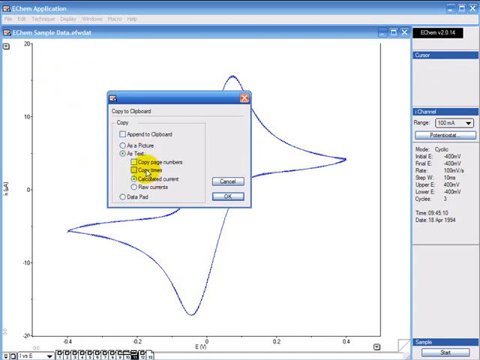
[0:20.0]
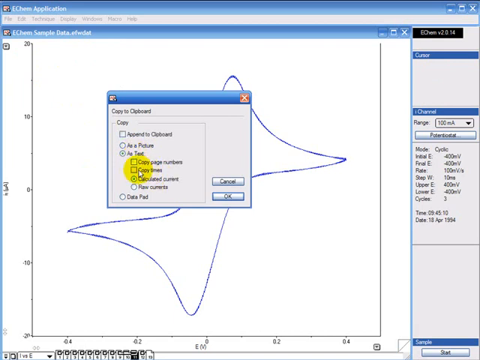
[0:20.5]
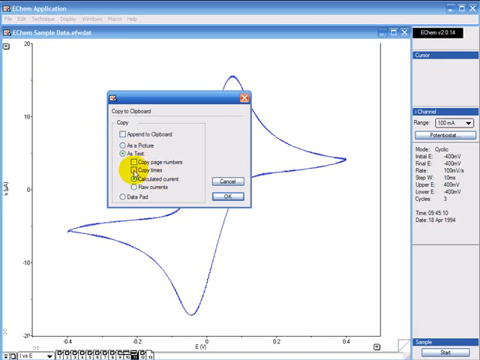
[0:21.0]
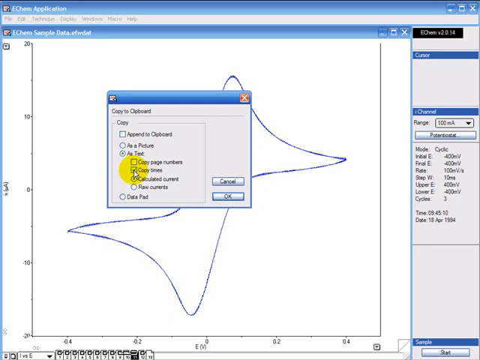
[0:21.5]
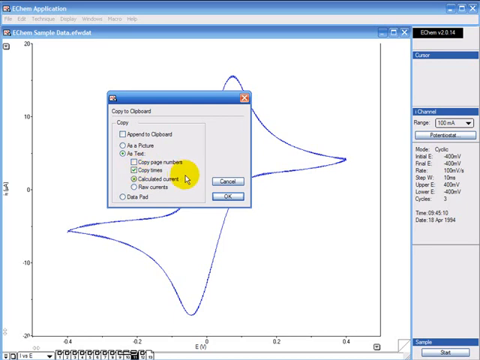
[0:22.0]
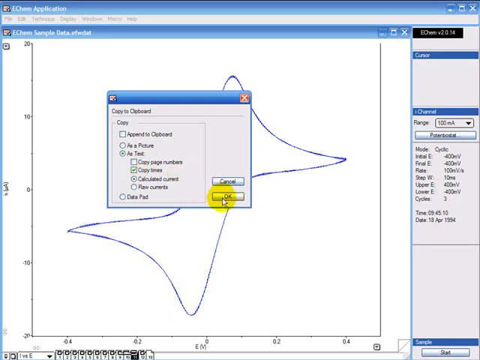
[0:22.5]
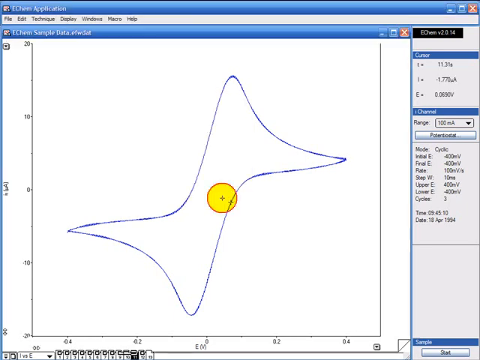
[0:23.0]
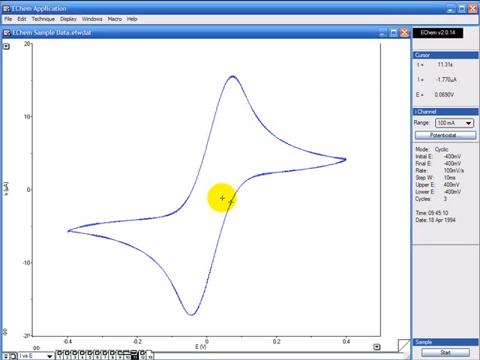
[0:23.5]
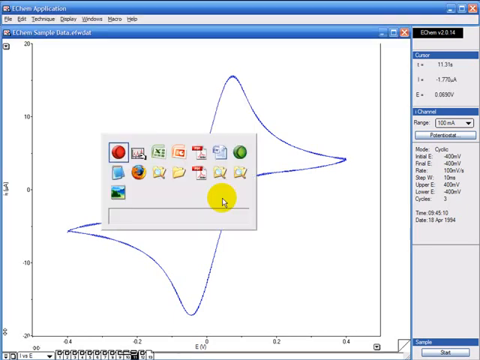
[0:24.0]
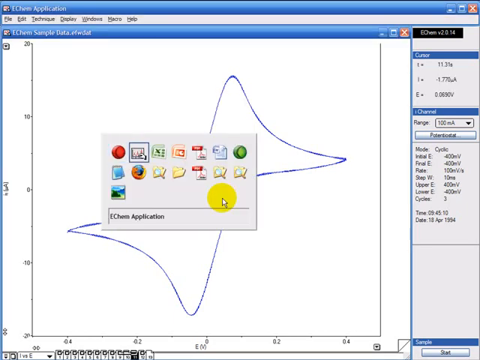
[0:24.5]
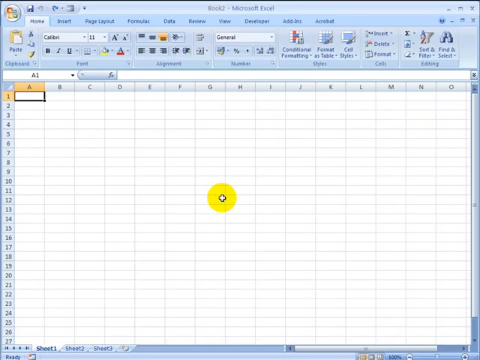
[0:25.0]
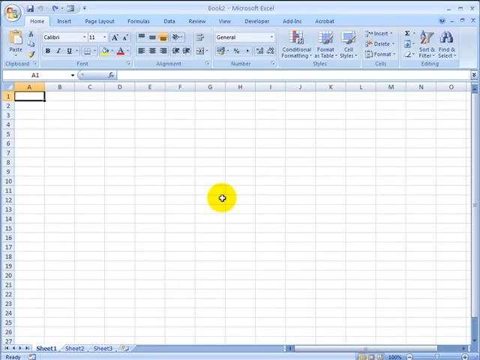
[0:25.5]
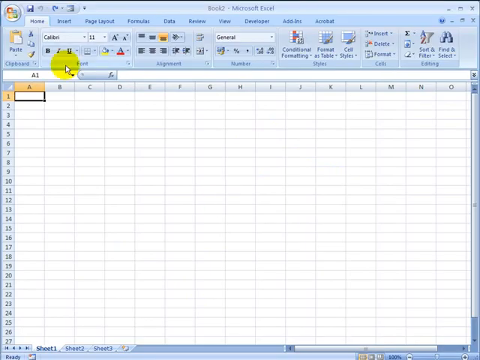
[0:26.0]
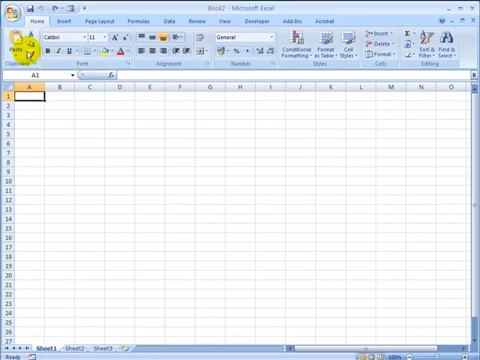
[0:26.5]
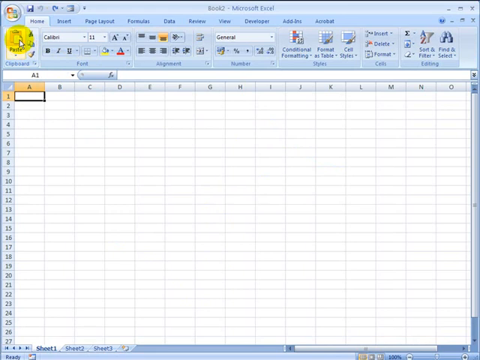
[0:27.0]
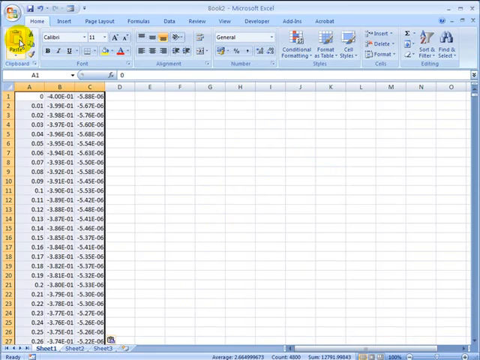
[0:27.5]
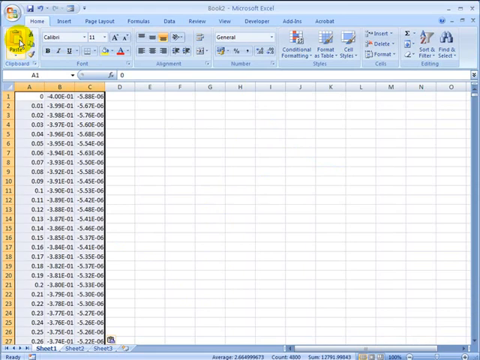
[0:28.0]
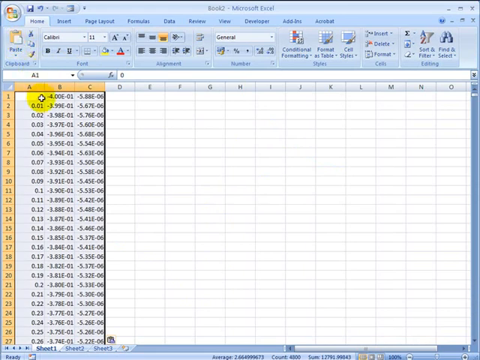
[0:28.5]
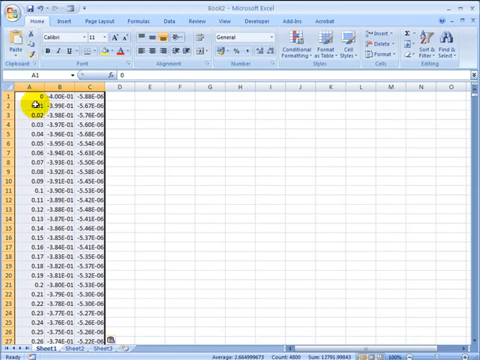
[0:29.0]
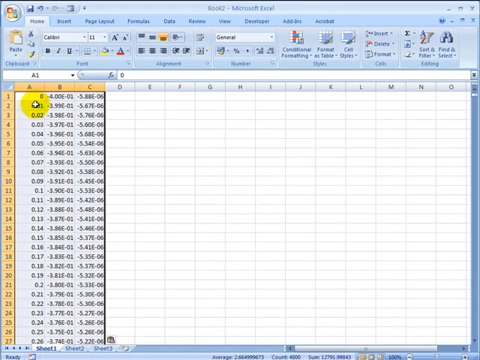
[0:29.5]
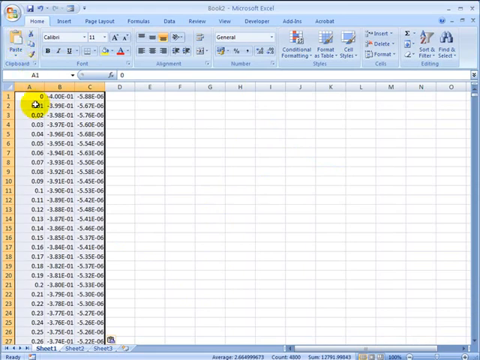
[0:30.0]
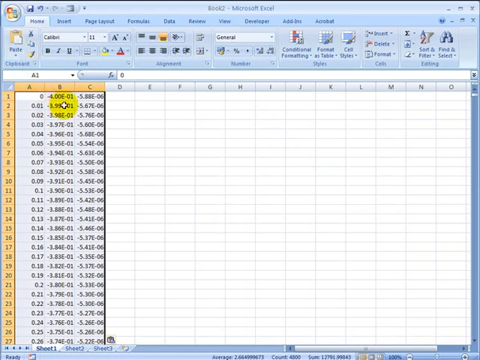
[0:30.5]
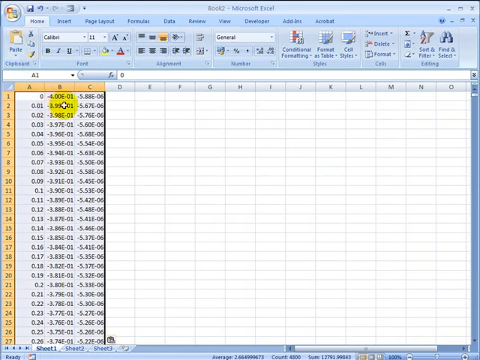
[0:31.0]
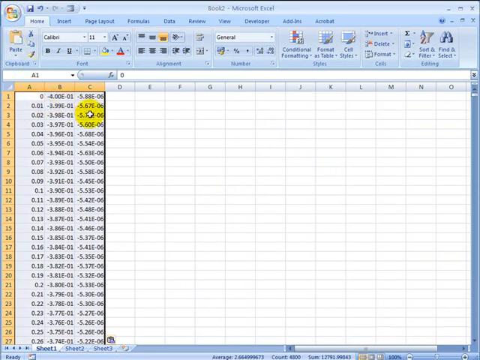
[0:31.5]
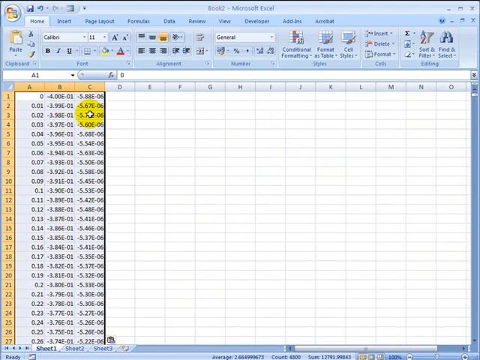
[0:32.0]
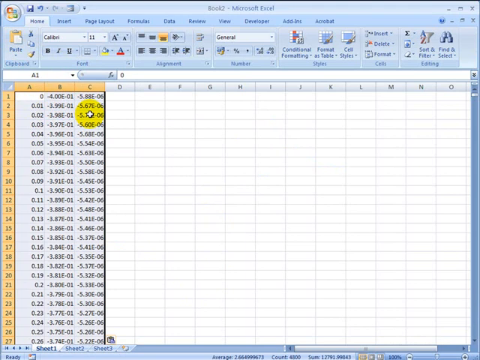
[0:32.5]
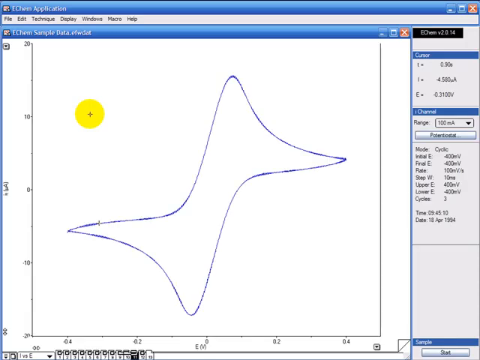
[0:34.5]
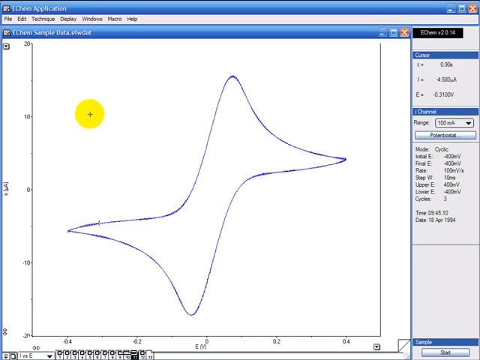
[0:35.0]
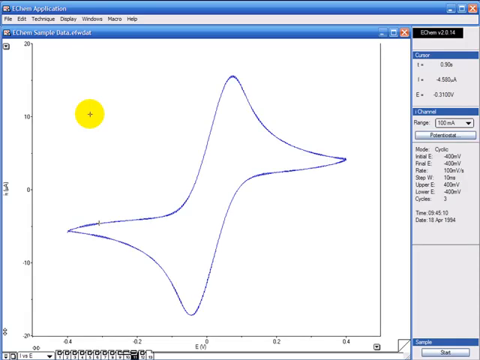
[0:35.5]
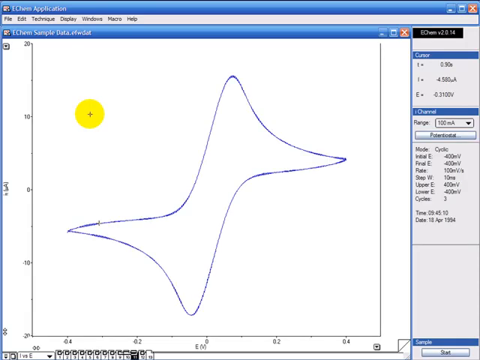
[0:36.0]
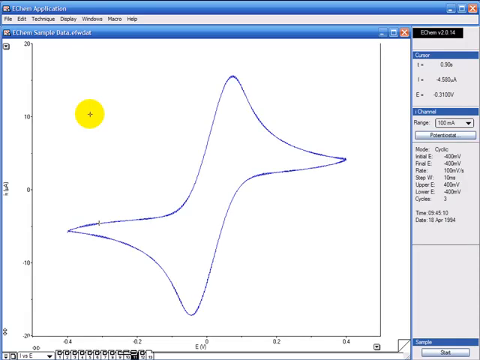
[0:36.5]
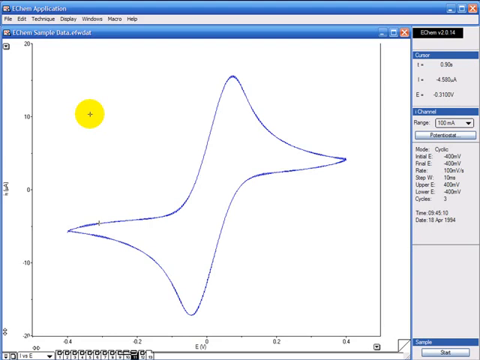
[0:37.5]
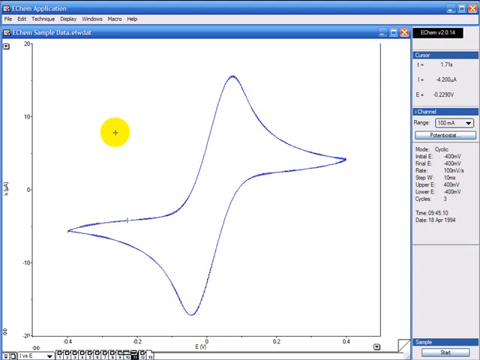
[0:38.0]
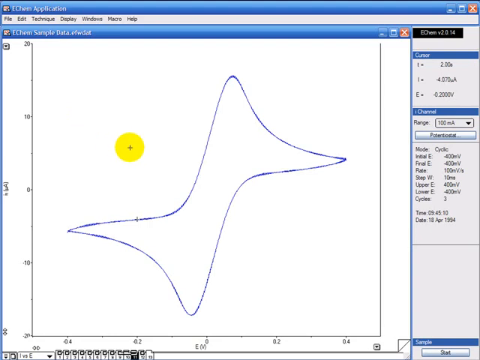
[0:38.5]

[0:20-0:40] The program walks step by step through copying the graph as text: Edit, copy, then copy as text. It says "copy times" and OK is clicked, then a list of applications appears and the Excel spreadsheet is chosen. Some symbols that could possibly be chosen from pop up first, and then the information is pasted into an Excel spreadsheet, taking up three columns, A, B and C. The cursor hovers over the columns.